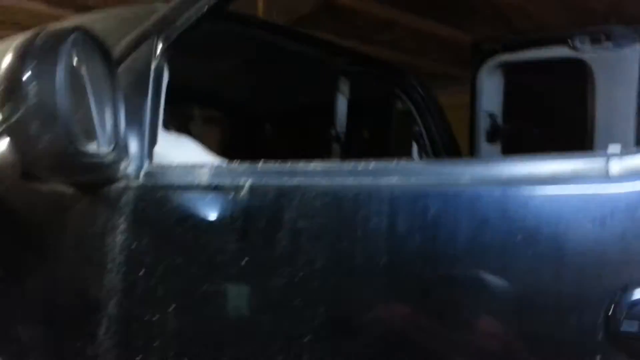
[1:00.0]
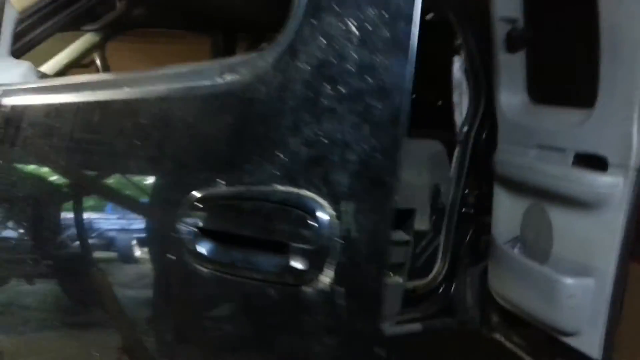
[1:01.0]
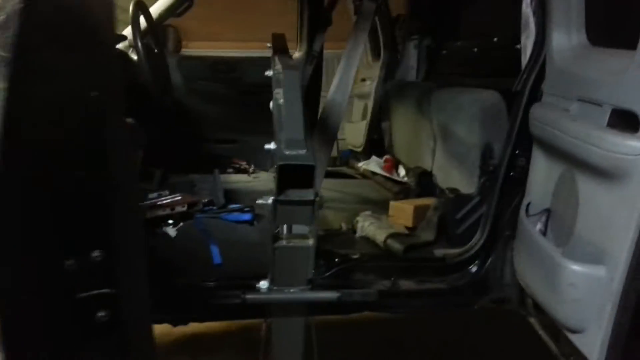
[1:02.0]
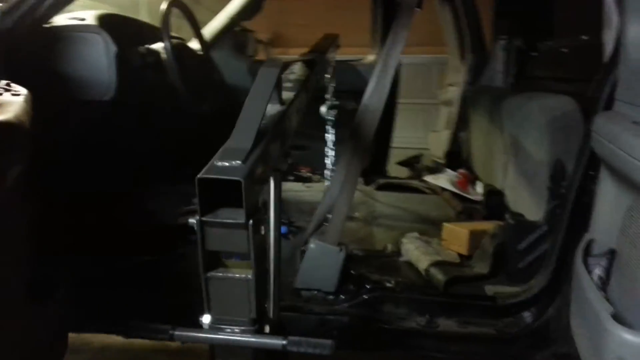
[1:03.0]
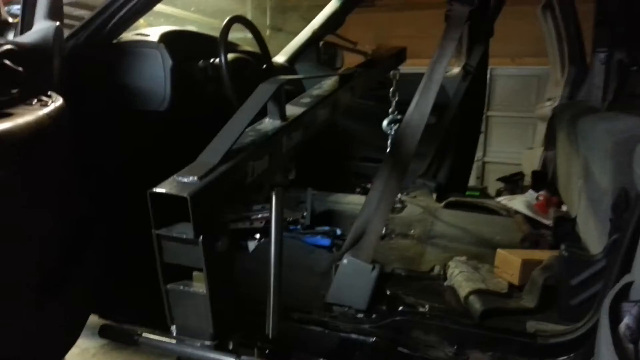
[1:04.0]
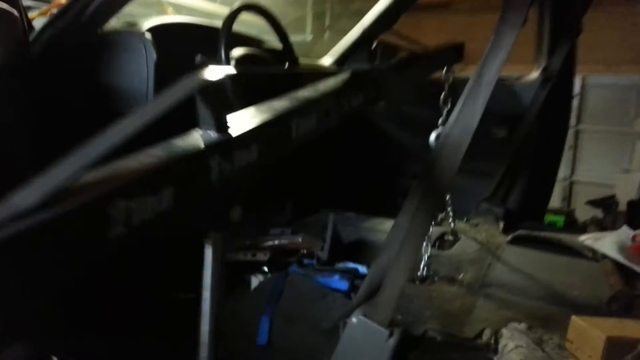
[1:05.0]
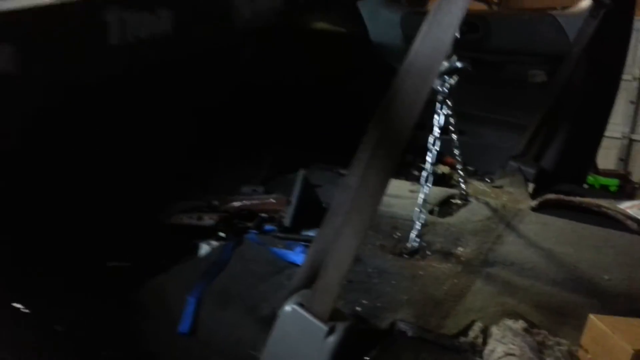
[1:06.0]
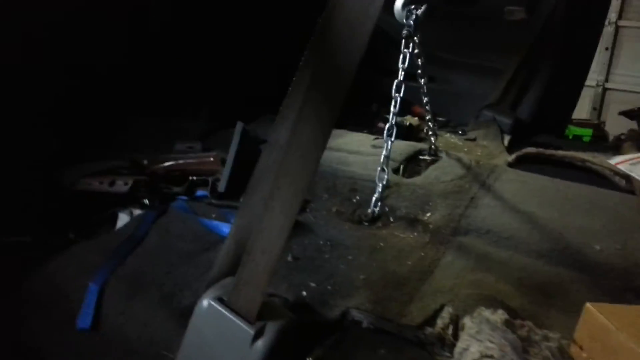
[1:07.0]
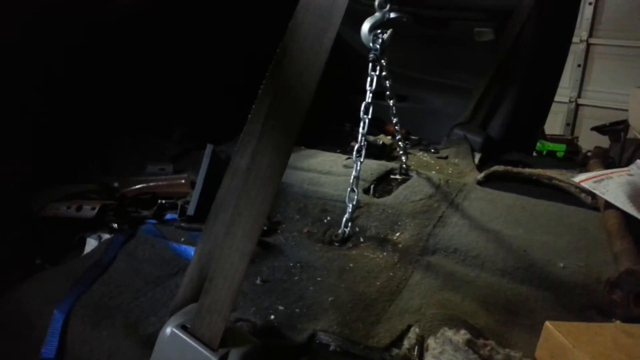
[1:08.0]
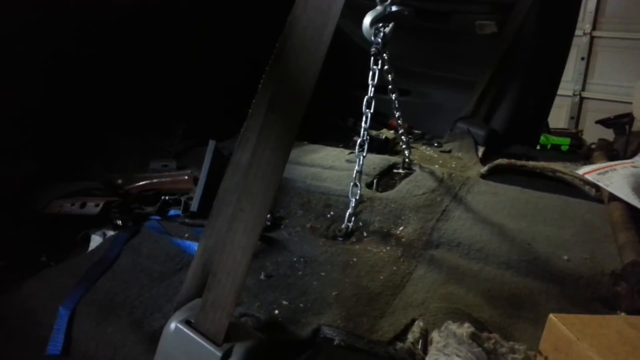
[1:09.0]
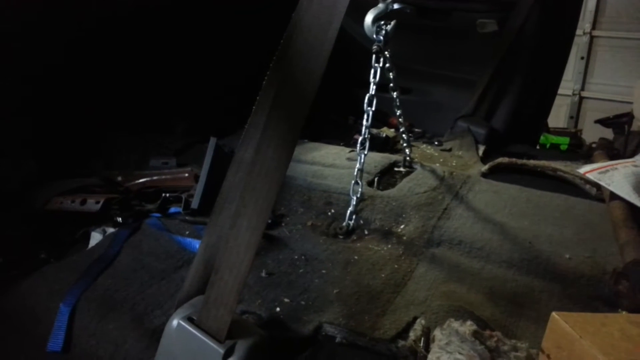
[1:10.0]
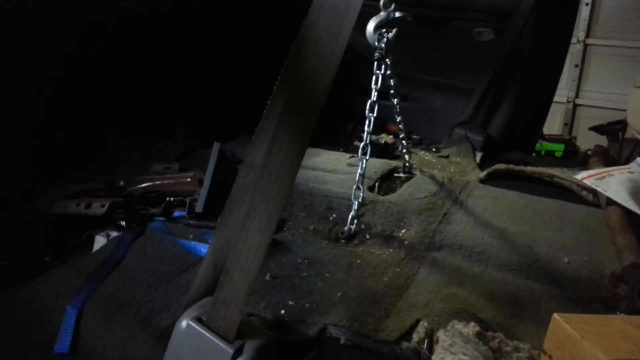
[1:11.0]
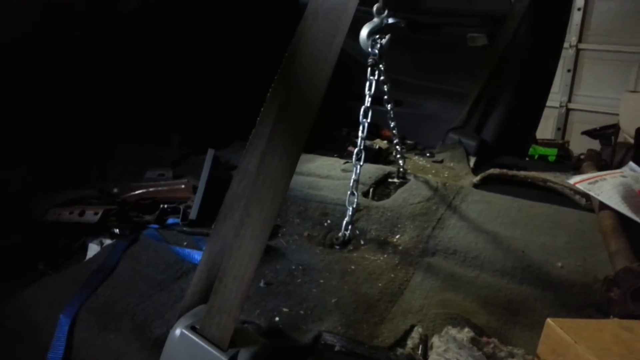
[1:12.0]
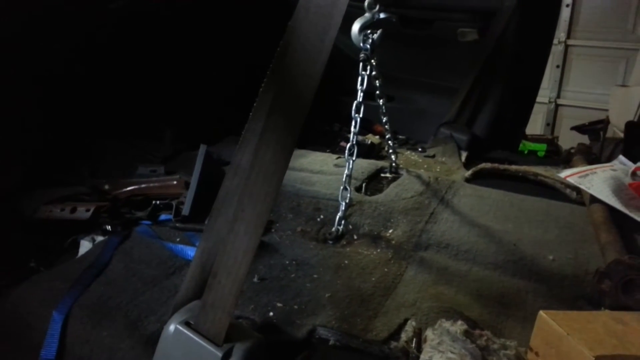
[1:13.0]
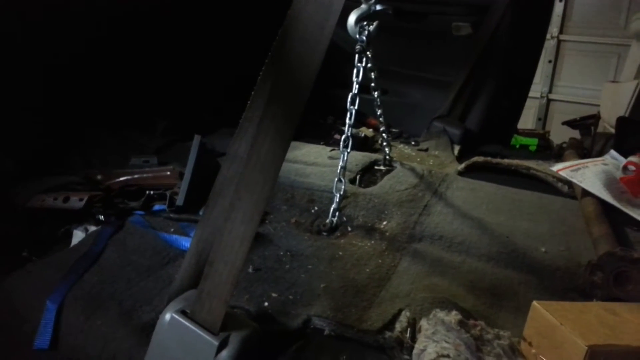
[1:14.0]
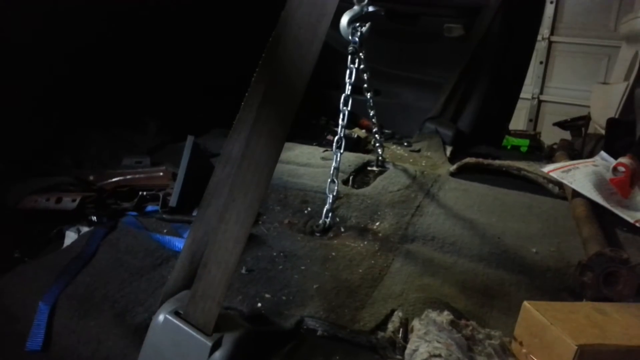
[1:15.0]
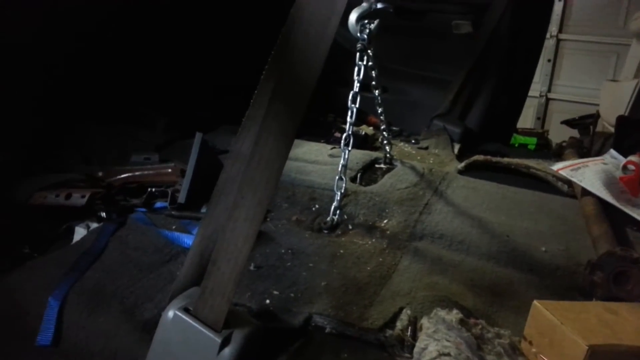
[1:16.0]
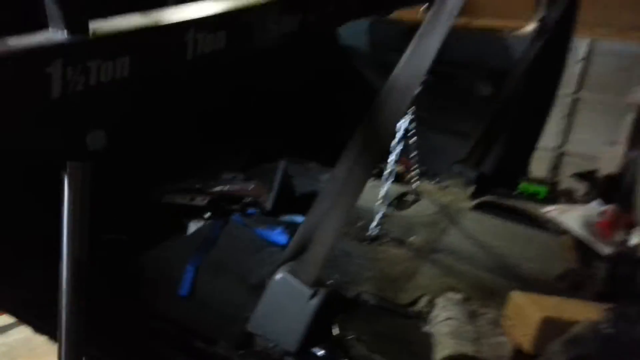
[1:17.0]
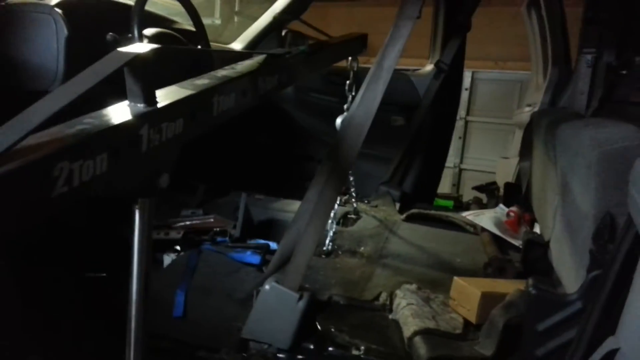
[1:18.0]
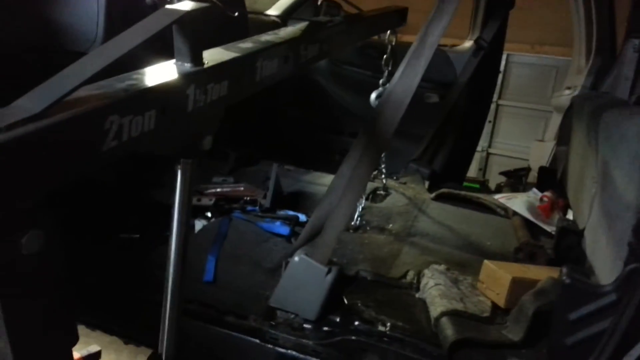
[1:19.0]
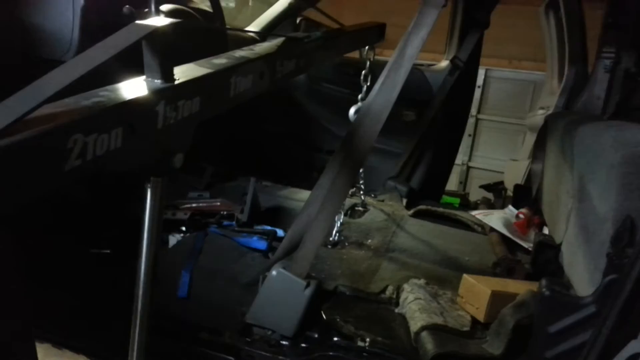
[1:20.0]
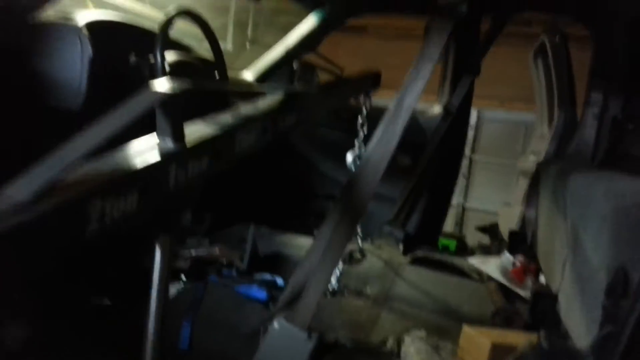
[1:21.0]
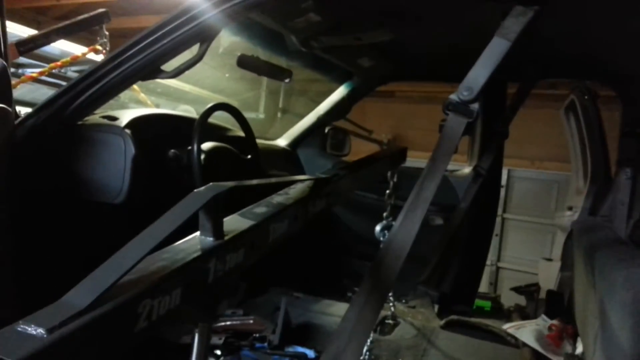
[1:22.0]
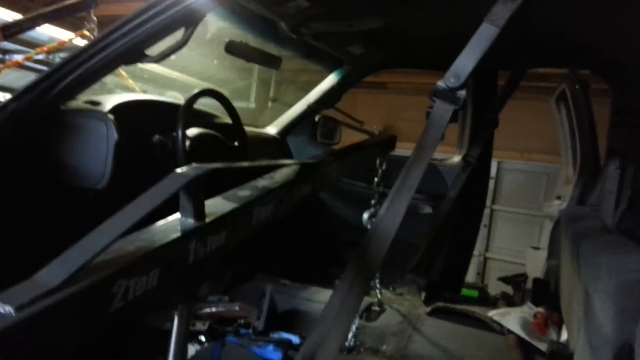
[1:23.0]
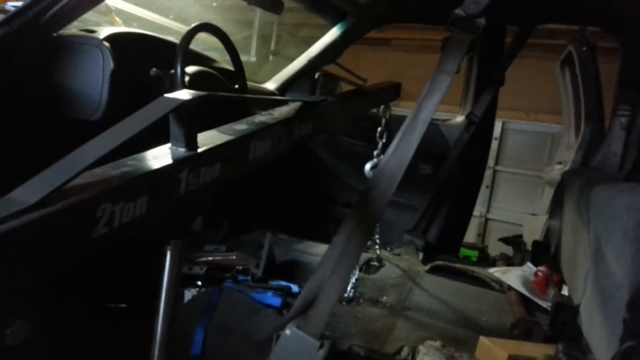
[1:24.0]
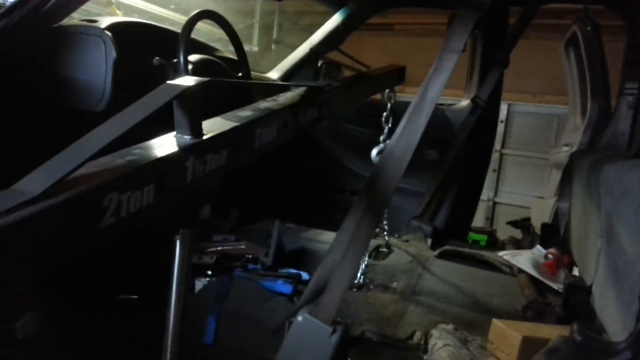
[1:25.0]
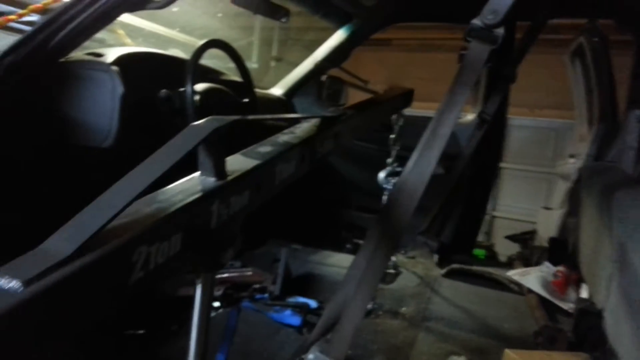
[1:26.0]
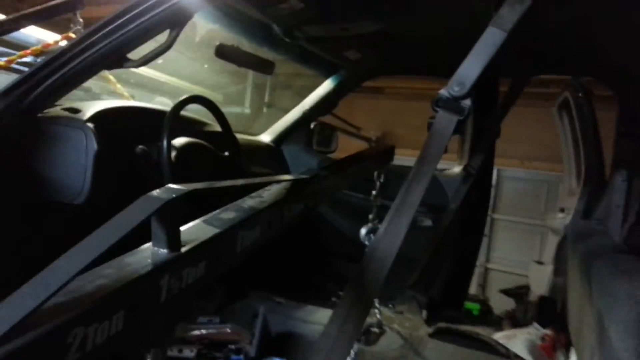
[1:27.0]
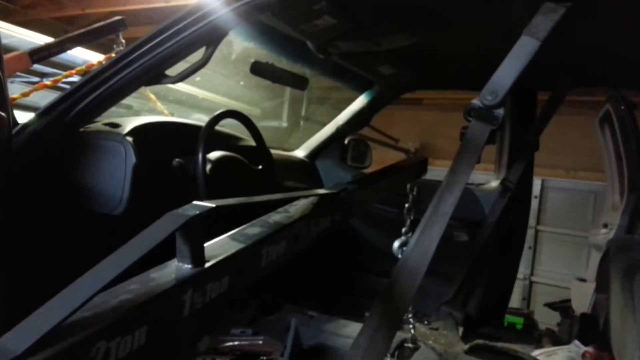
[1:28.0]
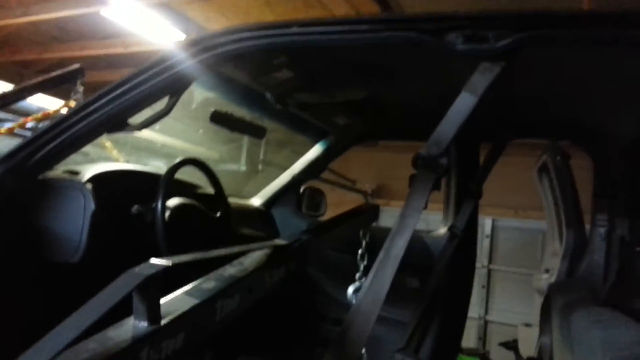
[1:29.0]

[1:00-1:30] The camera moves inside the vehicle, which appears possibly to be a truck since there is also an open back door on the right side. What looks like a black metal cross beam runs through the middle. Much of the interior appears to have been gutted as well. There are gray-looking seats in the back, but they seem to be missing some central parts. The camera moves a little toward the back so the view is diagonal toward the front steering wheel, then zooms in on the floor, where some kind of mechanism is also holding the car up in the middle. Chains coming from the floor are held in place by a silver hook. Quite a few objects are on the floor, along with what looks like dirt and grime; they are hard to recognize in the darkness, though what looks like a packing envelope is just on the right side. The camera focuses on this for a bit, zooms out for a wider view of the interior, shifts a little up toward the ceiling, and comes back to show the entire inside.